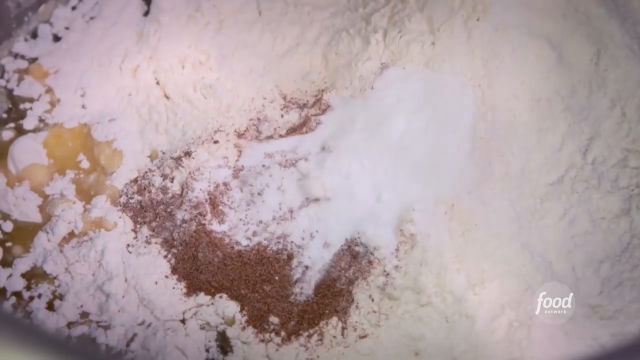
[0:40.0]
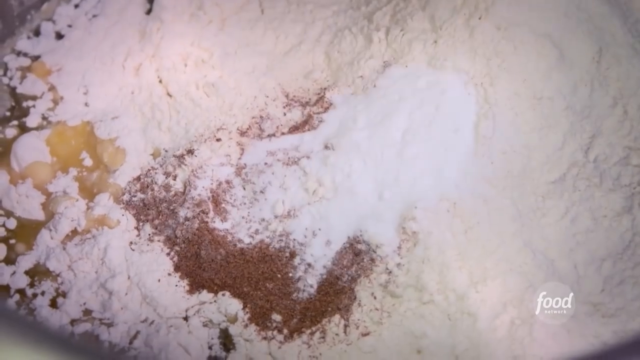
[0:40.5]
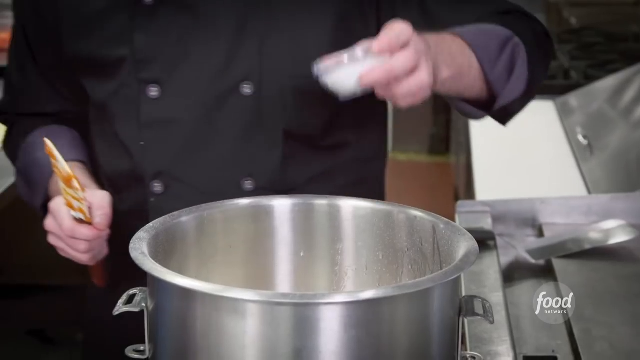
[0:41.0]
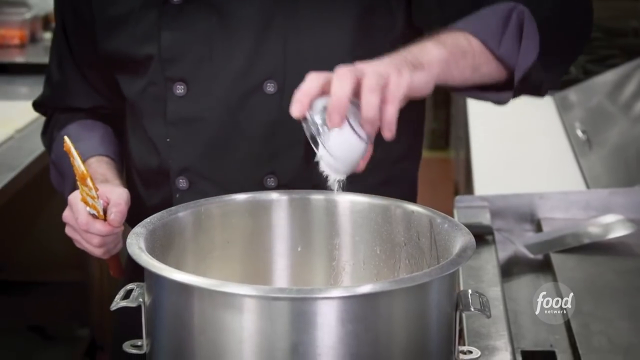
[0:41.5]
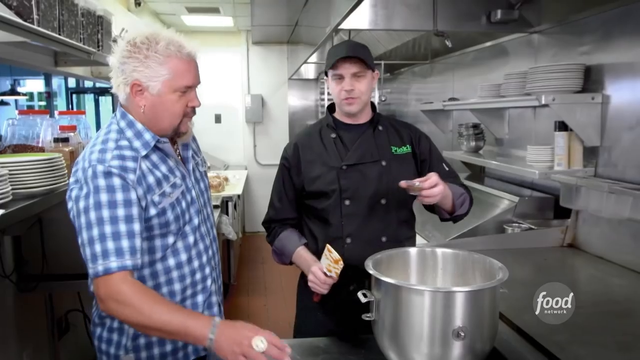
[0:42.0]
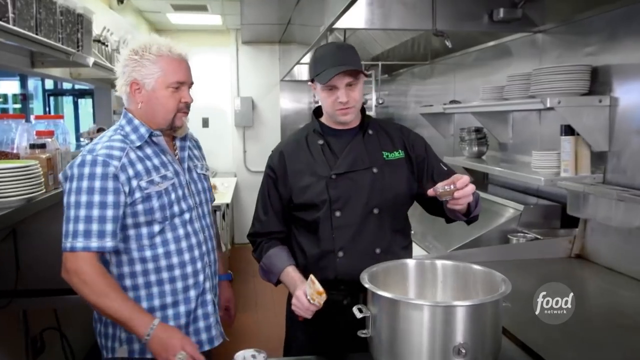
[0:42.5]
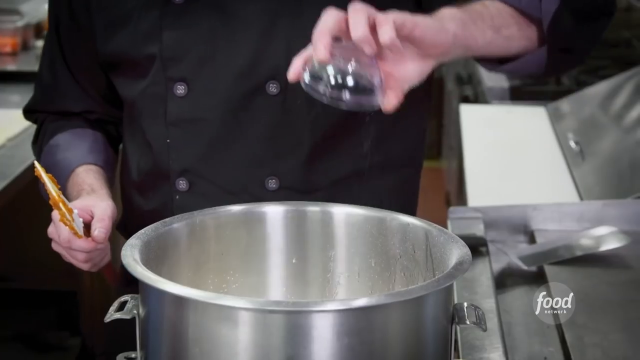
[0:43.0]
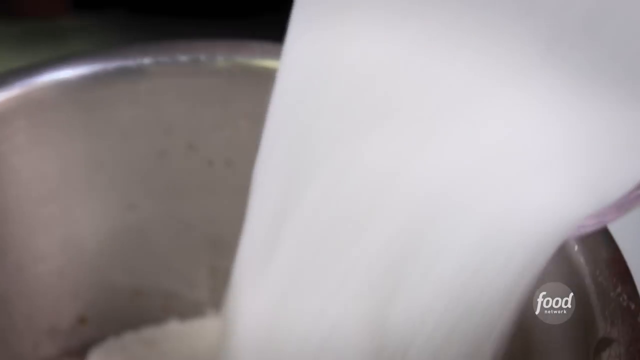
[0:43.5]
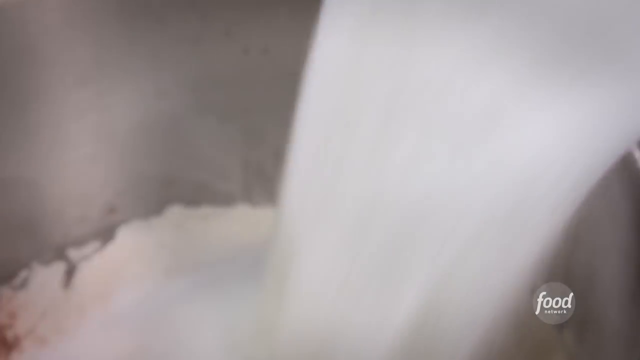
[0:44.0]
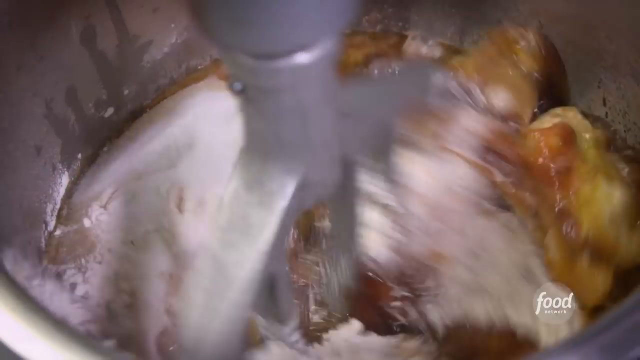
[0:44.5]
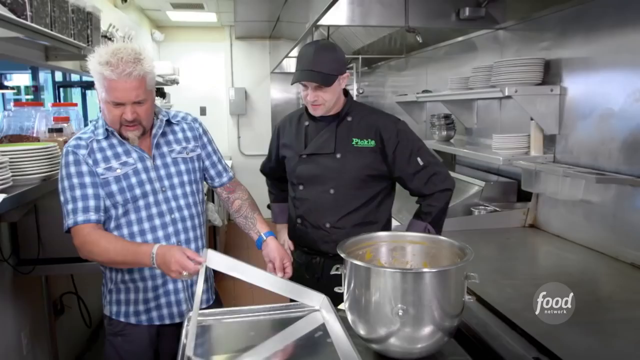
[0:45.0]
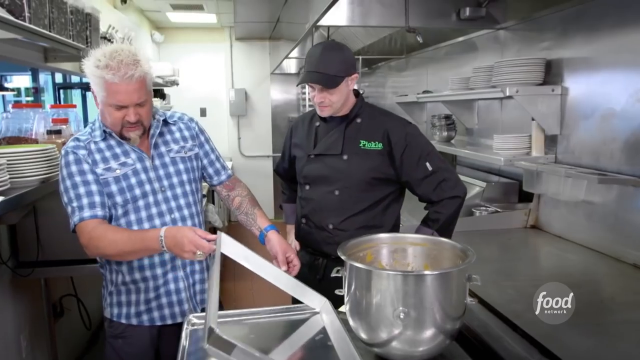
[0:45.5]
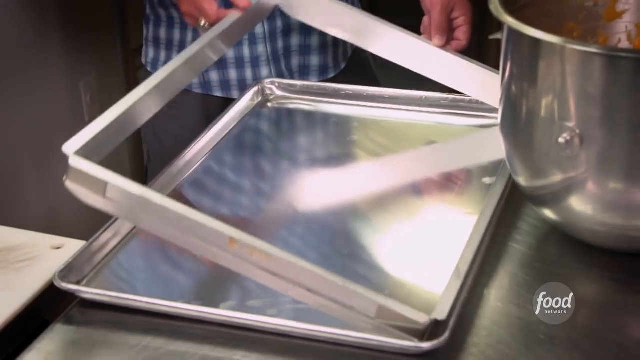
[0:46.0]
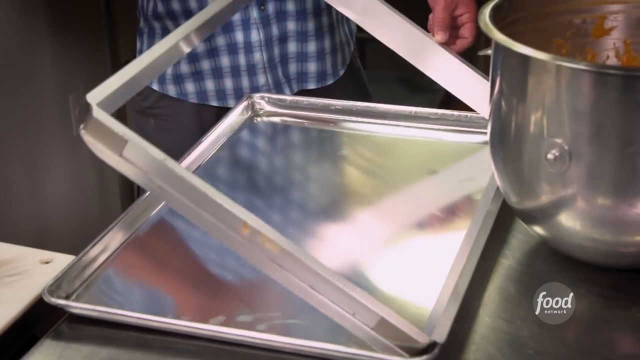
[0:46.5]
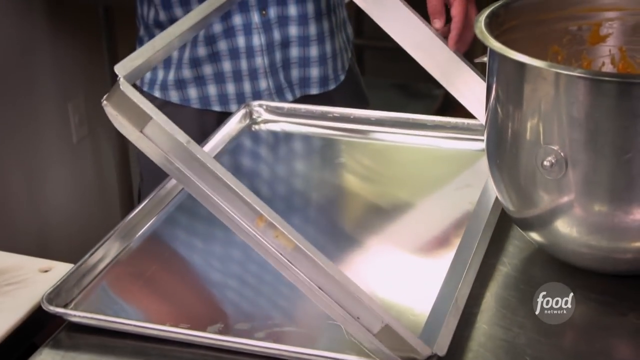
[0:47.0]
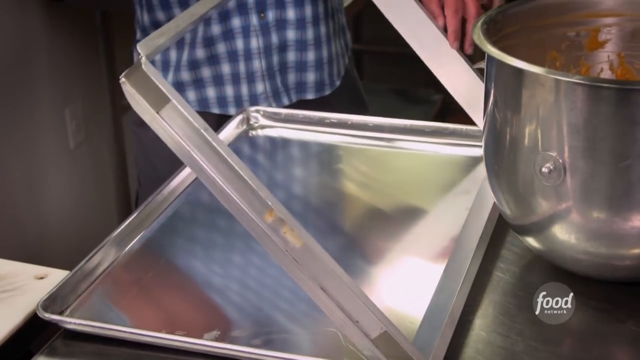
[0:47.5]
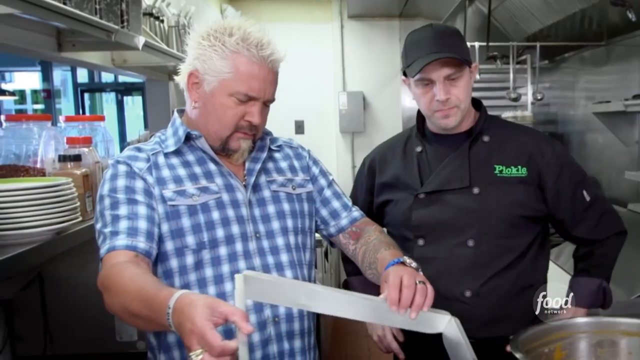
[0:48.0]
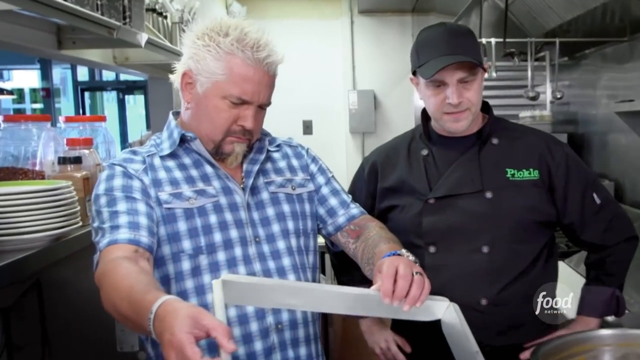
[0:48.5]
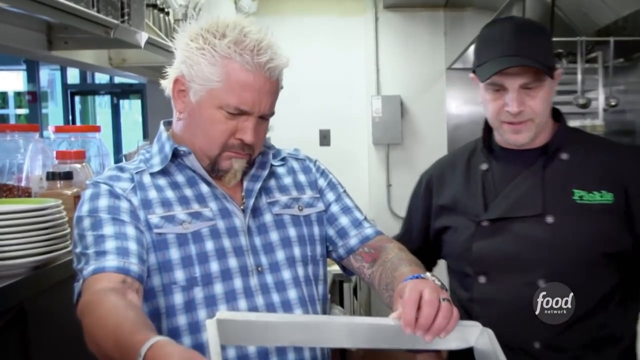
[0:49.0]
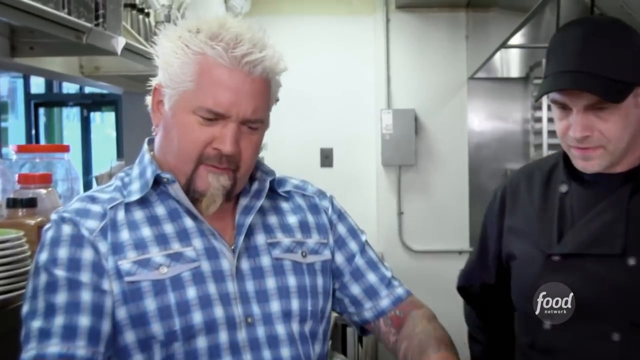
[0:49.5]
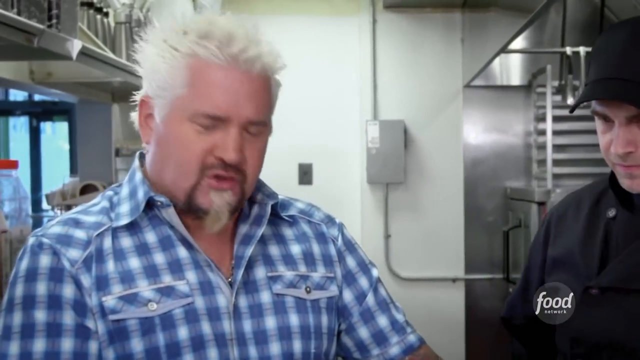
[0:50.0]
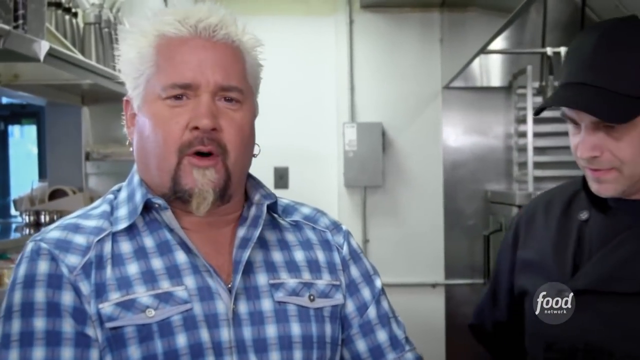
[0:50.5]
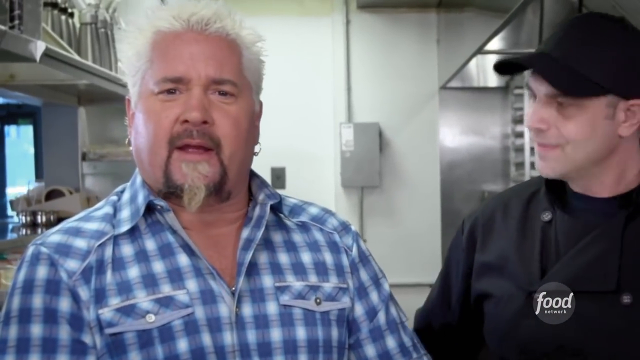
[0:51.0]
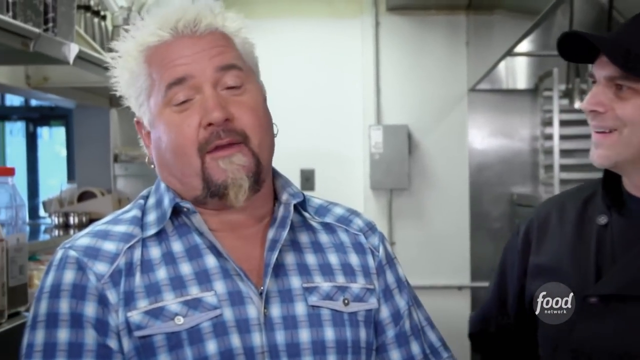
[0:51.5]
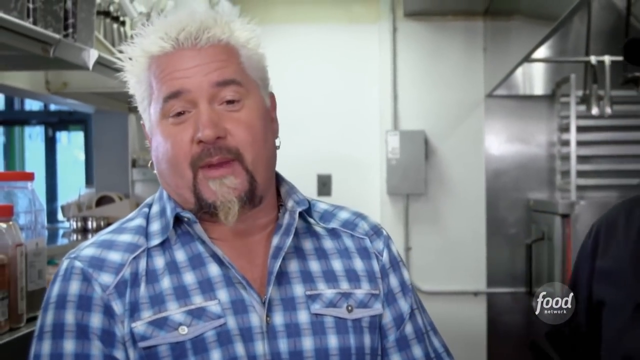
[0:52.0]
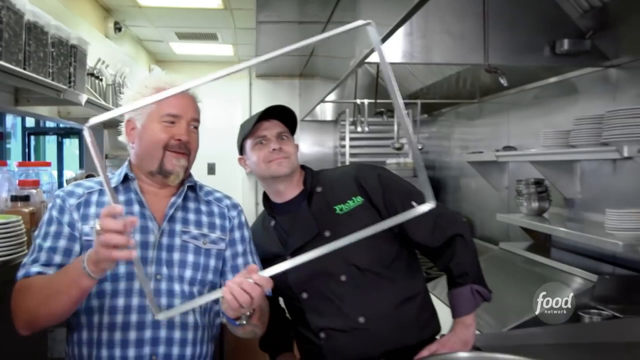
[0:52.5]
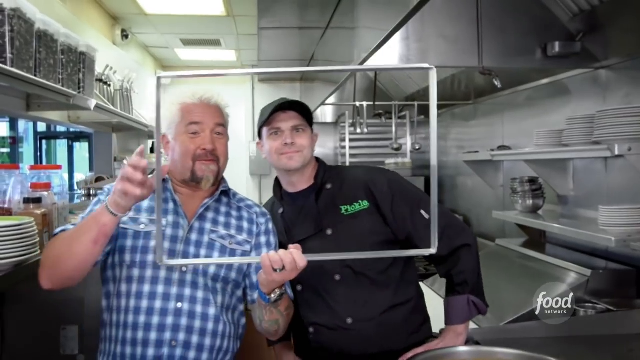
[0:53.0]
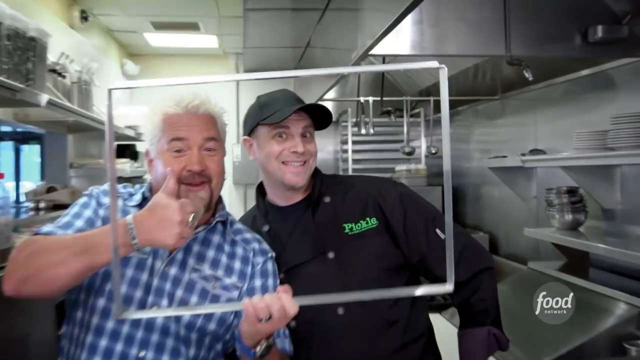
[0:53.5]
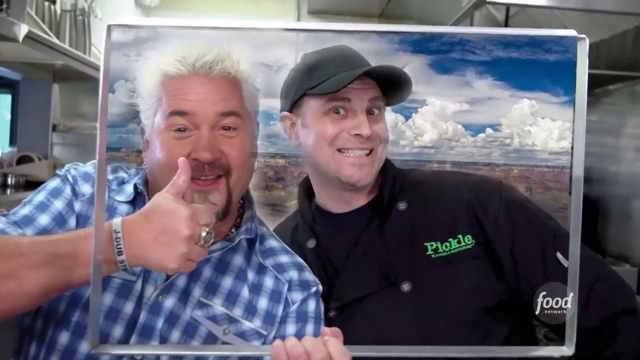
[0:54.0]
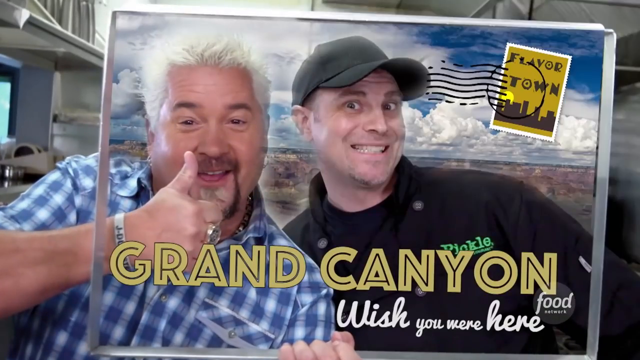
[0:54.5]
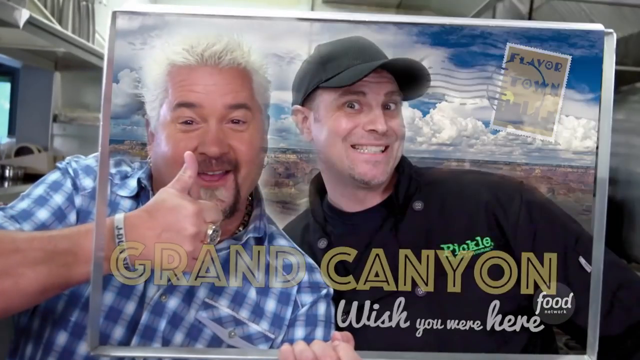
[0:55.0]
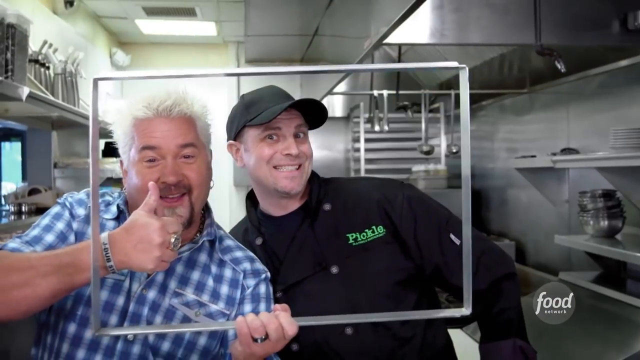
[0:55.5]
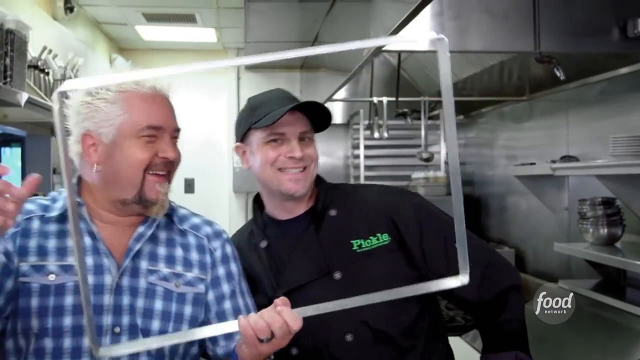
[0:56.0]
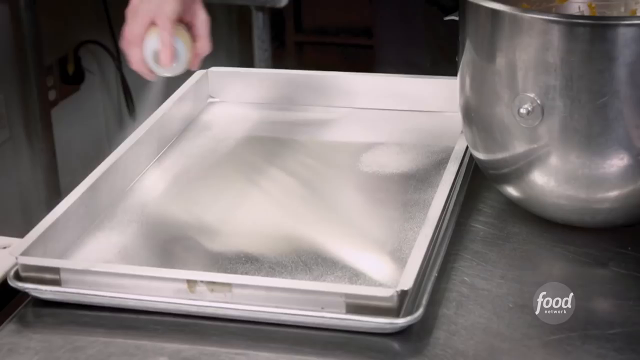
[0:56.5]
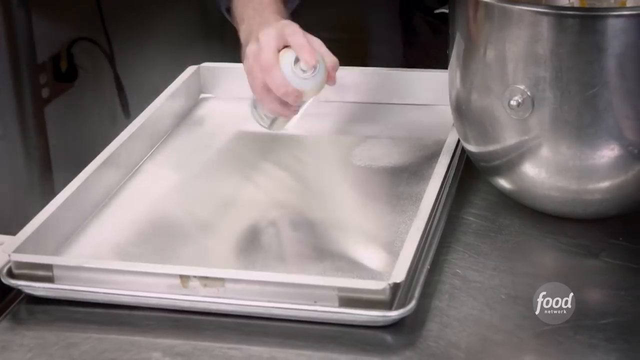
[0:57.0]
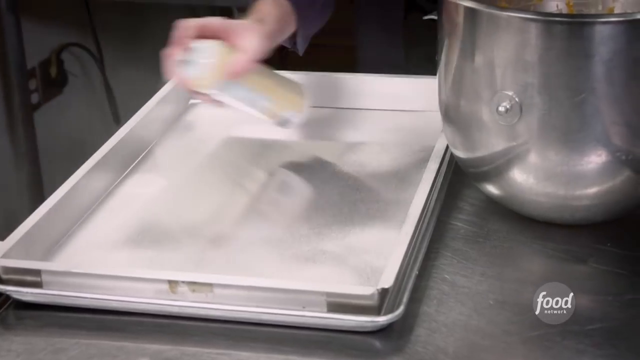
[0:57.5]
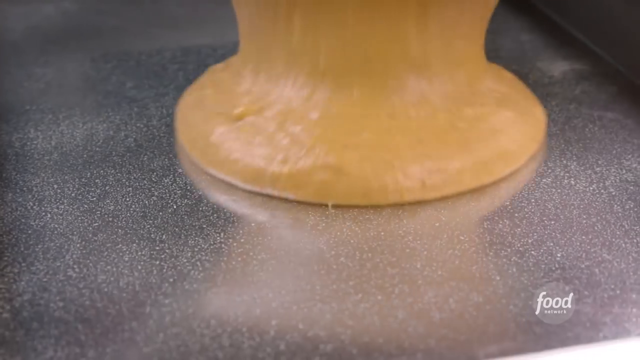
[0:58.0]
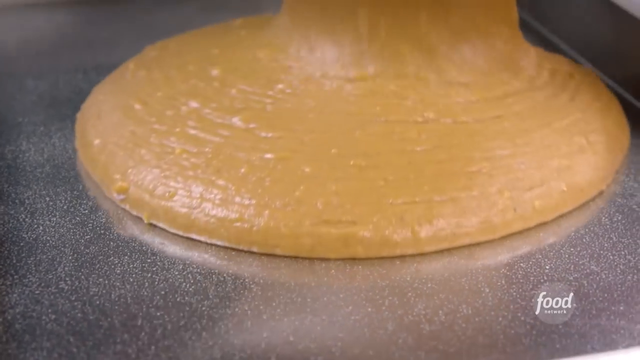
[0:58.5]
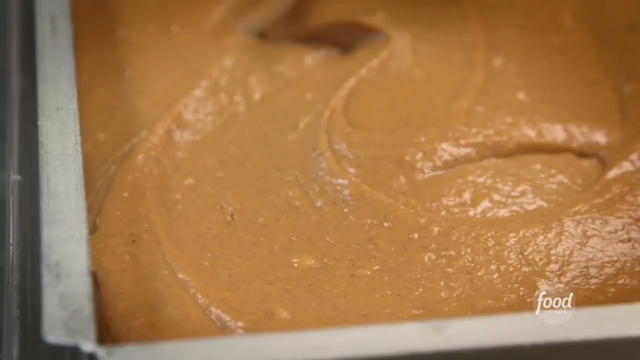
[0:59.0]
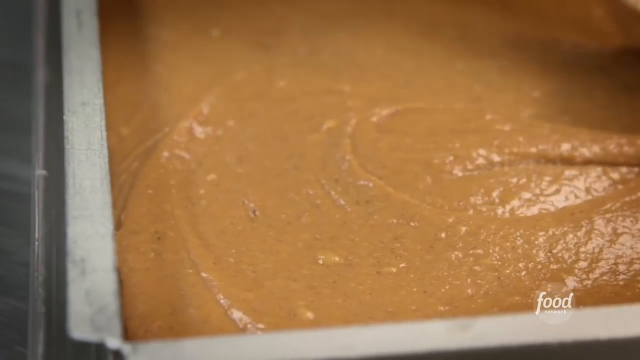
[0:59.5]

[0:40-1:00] The batter of eggs and flour continues, with what looks like salt and maybe brown sugar, and what looks like milk is added to the mix. Guy Fieri looks at a tray and some sort of liner for it, which he holds up like a picture frame while giving a thumbs up. Other ingredients are added to the mix, and Guy Fieri looks very happy watching. The pan is sprayed down with nonstick spray, and the batter, a brown-orangey, almost pumpkin-looking mixture, is poured and smoothed out into the pan.